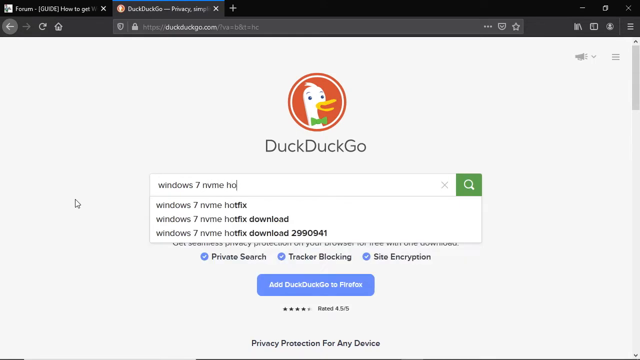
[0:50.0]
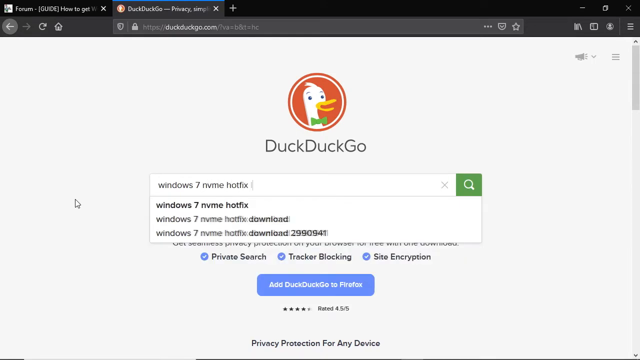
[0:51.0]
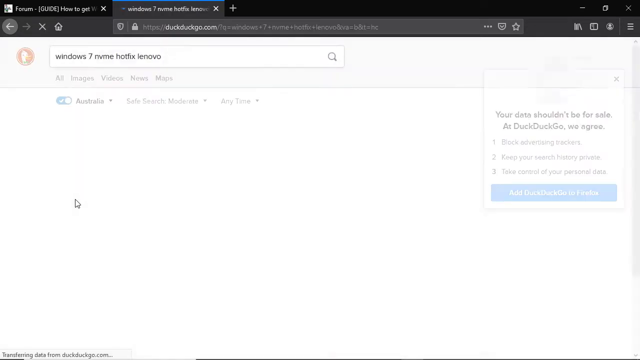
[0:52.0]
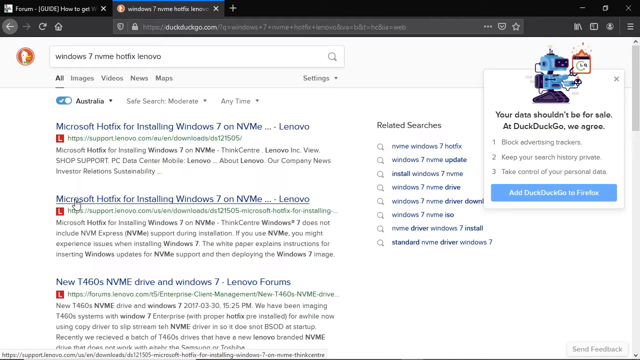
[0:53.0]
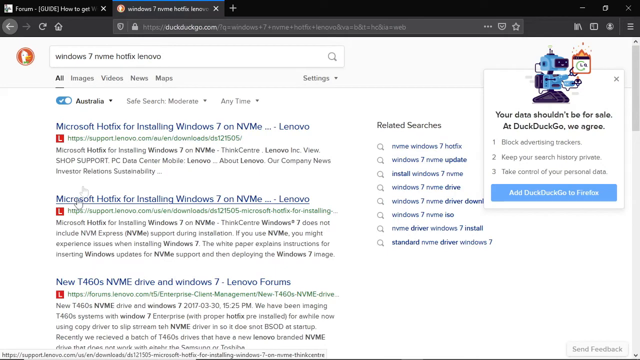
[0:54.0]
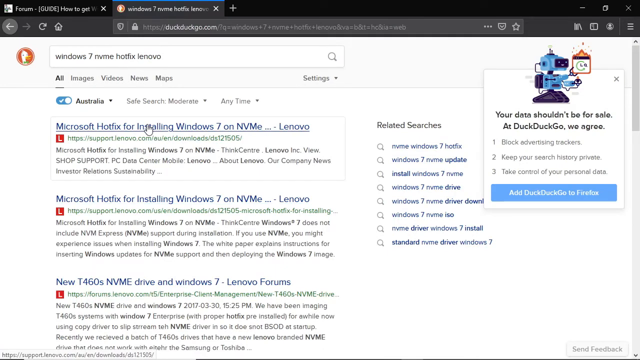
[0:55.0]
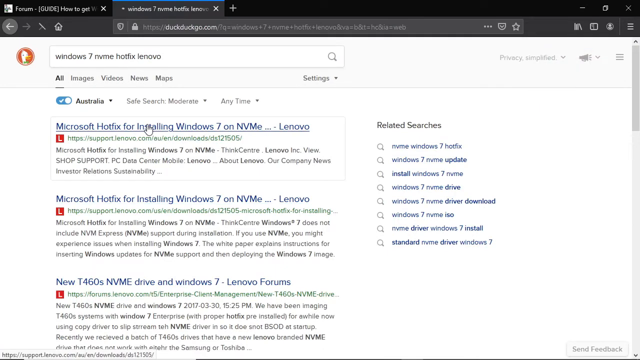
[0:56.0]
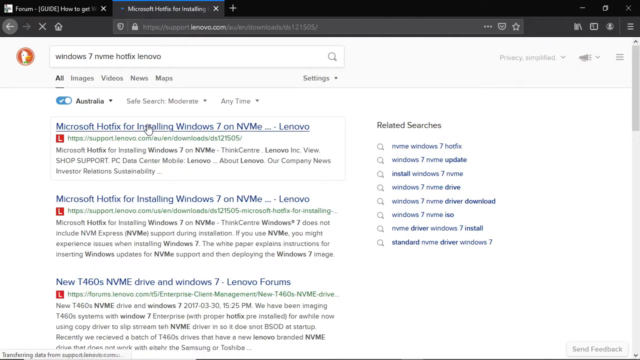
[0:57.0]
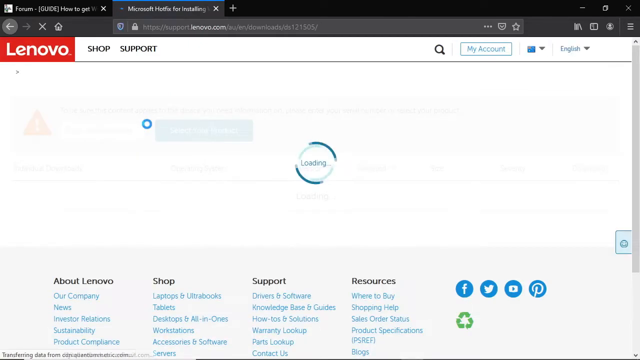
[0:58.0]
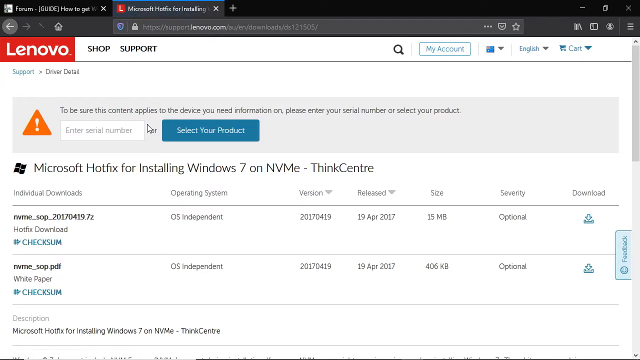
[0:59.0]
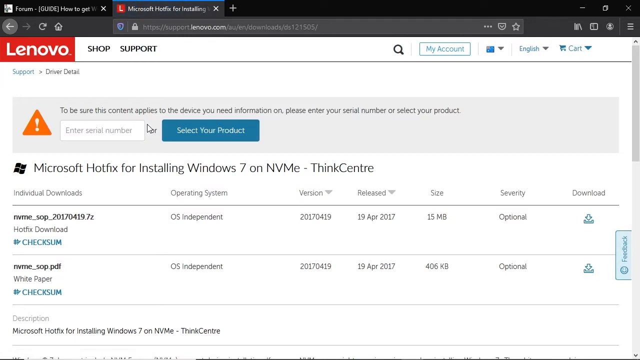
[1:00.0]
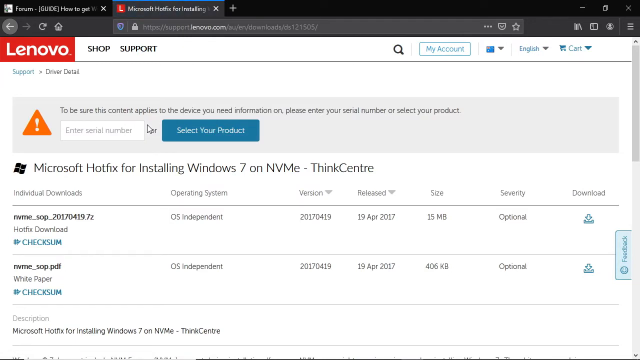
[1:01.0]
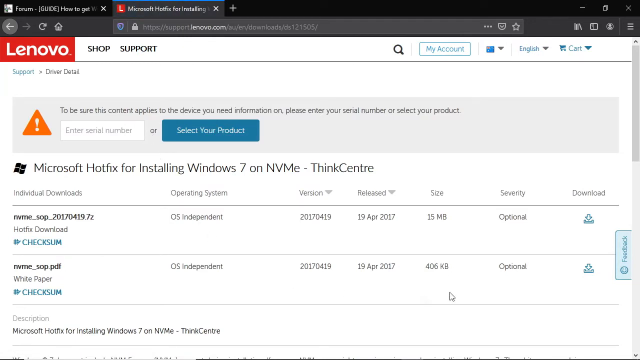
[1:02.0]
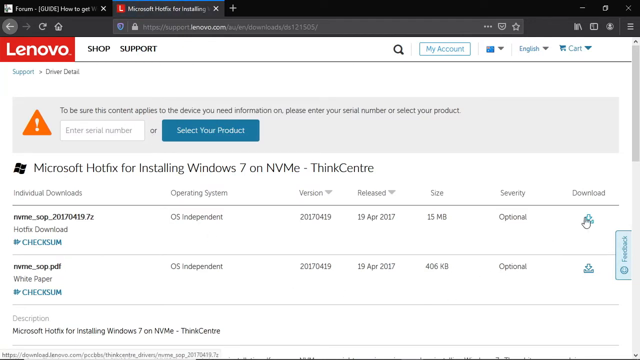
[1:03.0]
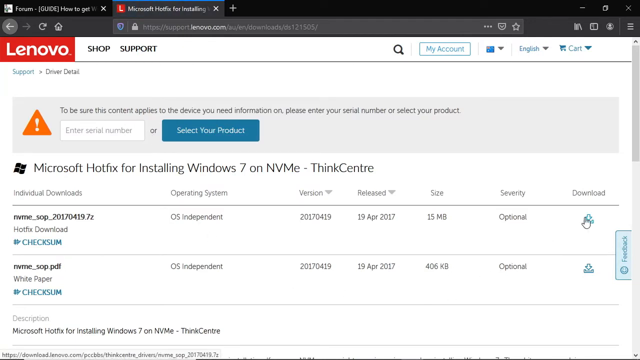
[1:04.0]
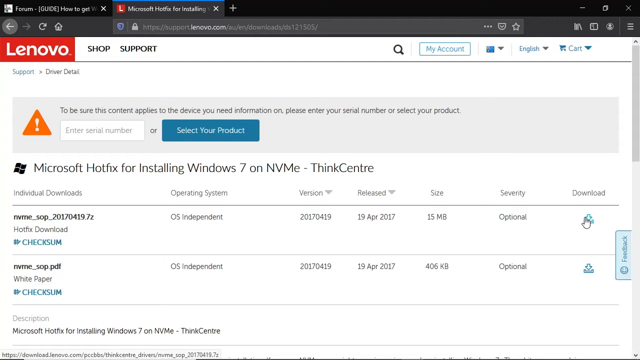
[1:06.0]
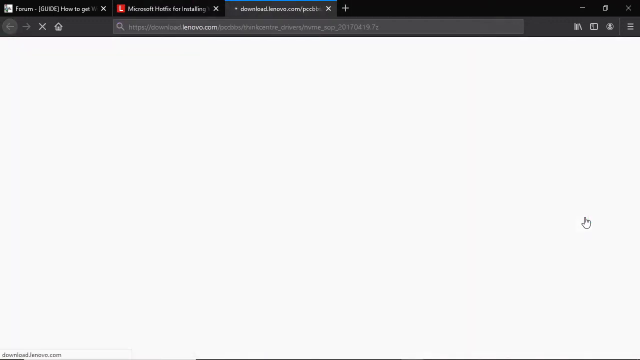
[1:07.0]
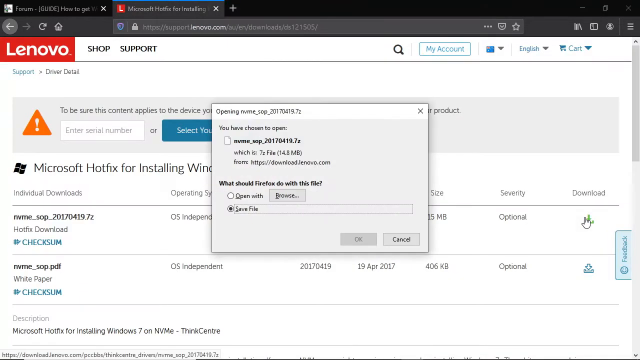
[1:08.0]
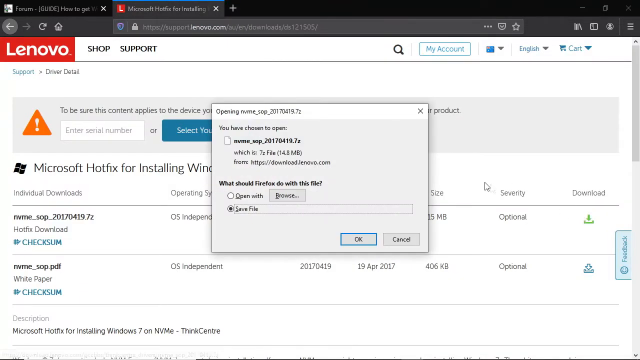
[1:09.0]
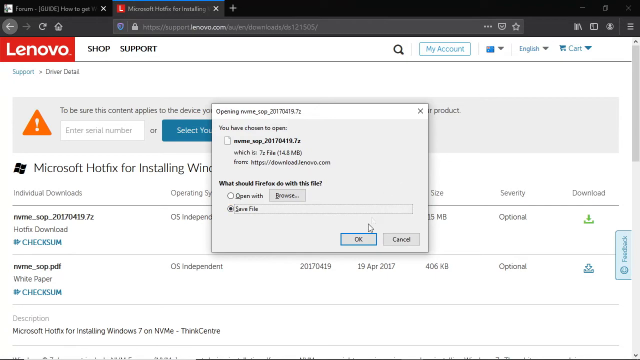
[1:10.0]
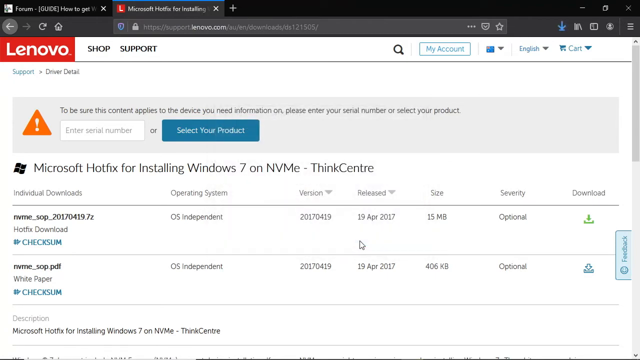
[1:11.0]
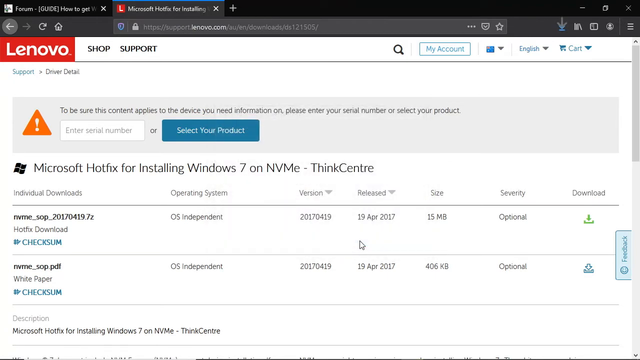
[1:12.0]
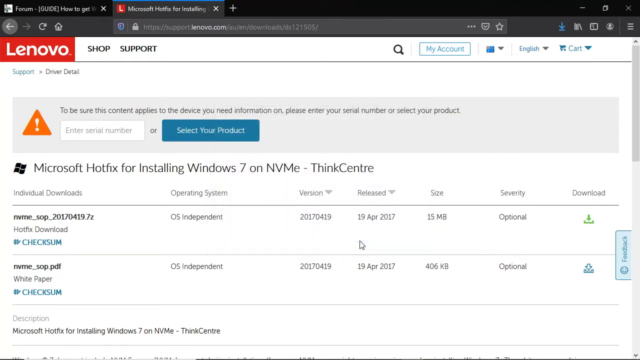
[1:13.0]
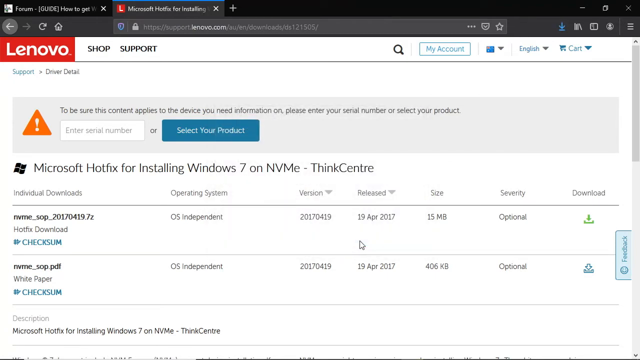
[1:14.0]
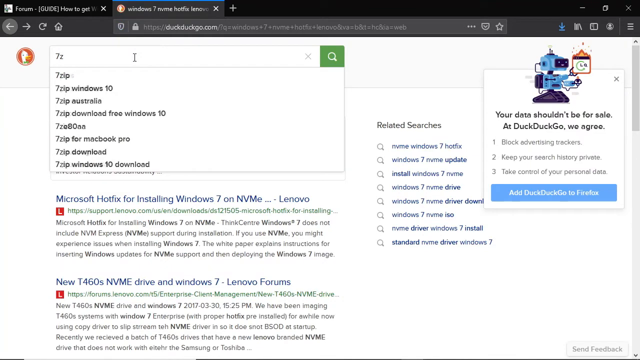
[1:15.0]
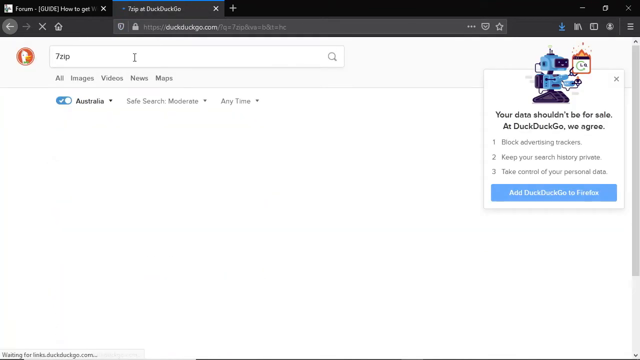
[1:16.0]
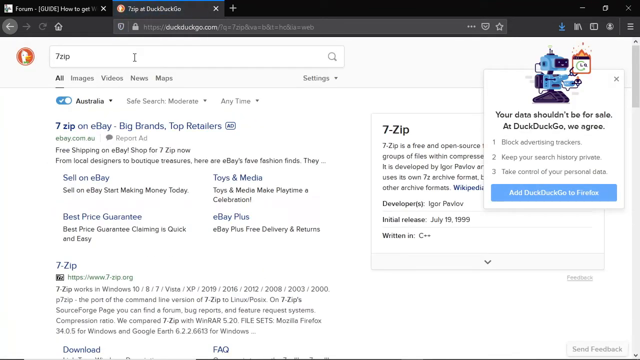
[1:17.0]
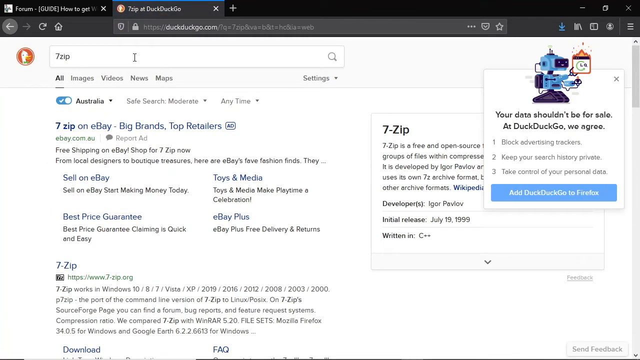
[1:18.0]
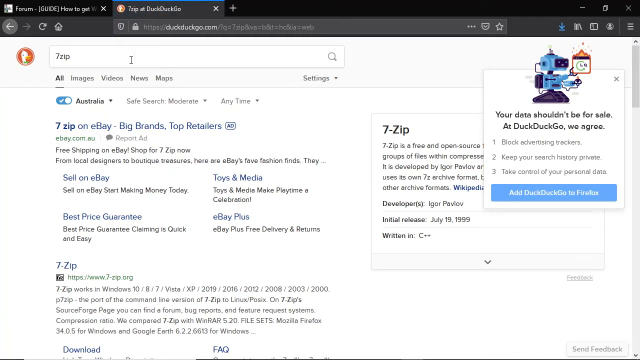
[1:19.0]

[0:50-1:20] A desktop screen is shown, apparently in Google Chrome. In the DuckDuckGo search engine in the center of the screen, the person types "Windows 7 NVMe hotfix Lenovo." Search results appear, and the person arrows over the top one and apparently clicks it. A Lenovo site opens, titled "Microsoft Hotfix for Installing Windows 7 on NVMe-ThinkCenter," with a couple of different downloads listed below. He arrows to the right over the download link for the first option and clicks it. An open window comes up and he clicks OK. He then returns to the search results, apparently using the back command, goes into the search box, types "7zip" and hits Enter. Results display, and he clicks the first option on the list.